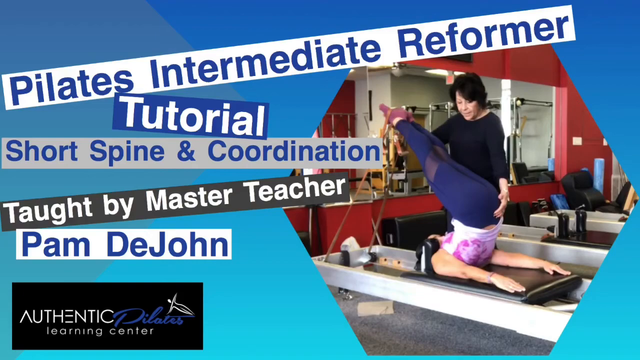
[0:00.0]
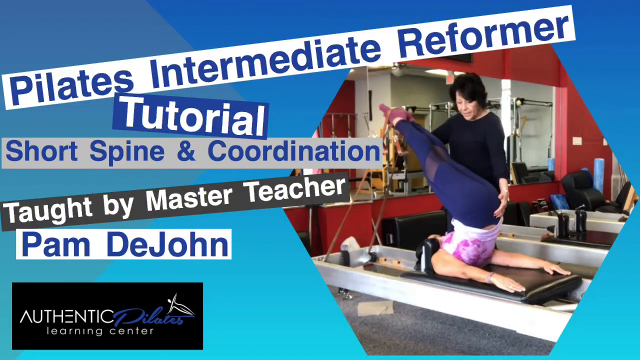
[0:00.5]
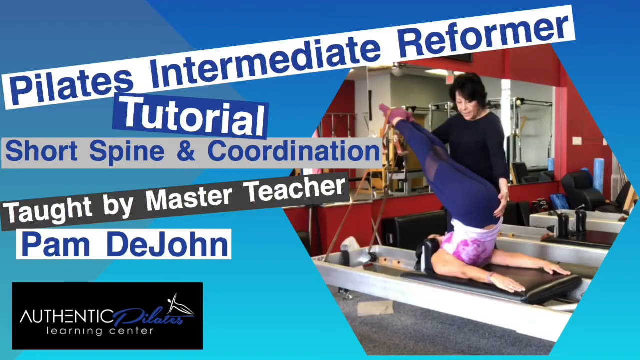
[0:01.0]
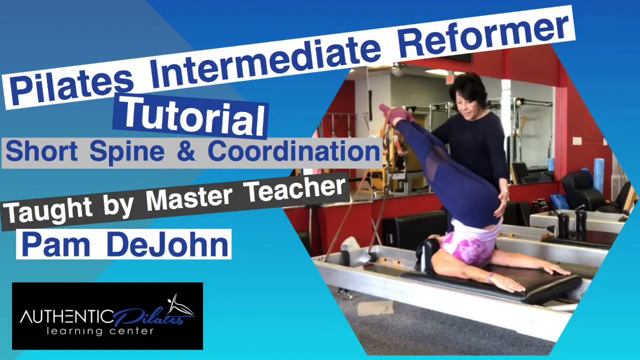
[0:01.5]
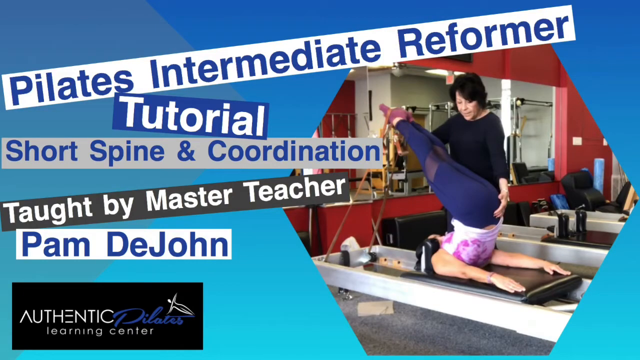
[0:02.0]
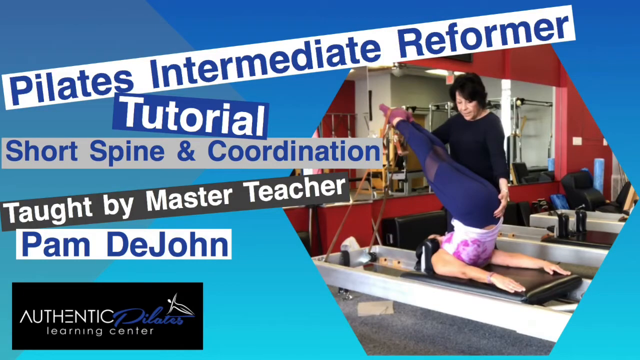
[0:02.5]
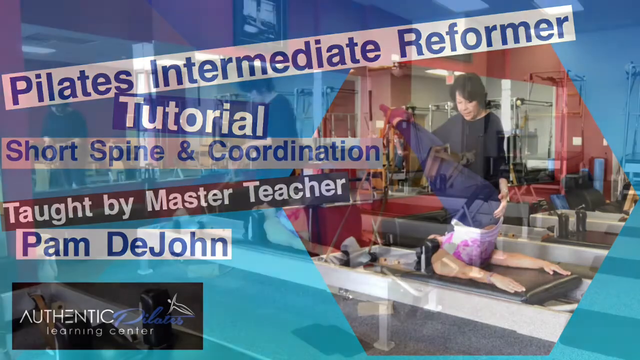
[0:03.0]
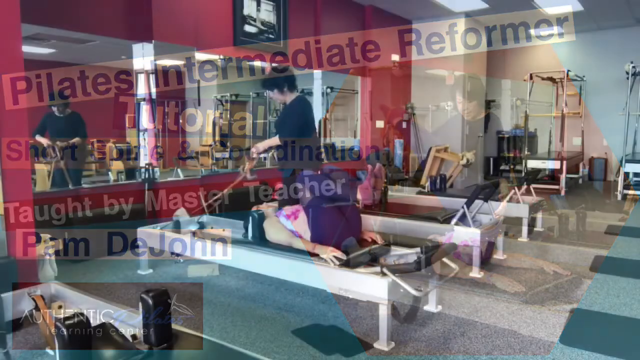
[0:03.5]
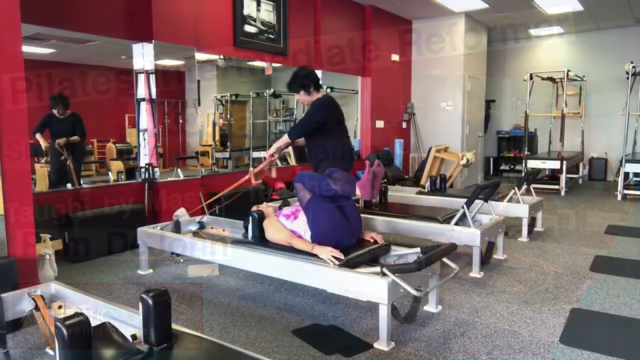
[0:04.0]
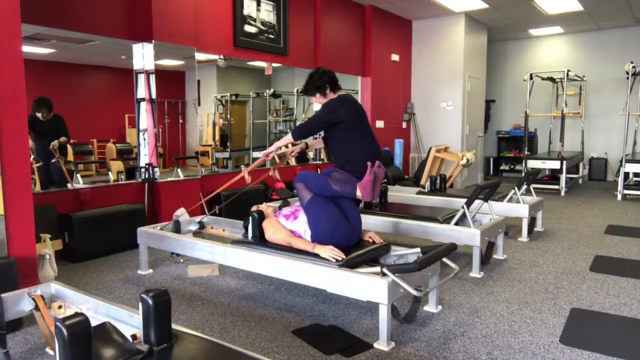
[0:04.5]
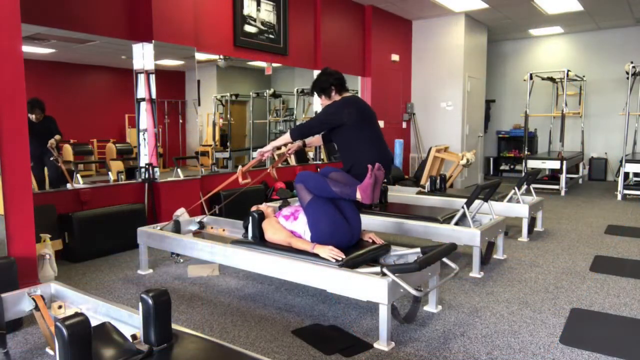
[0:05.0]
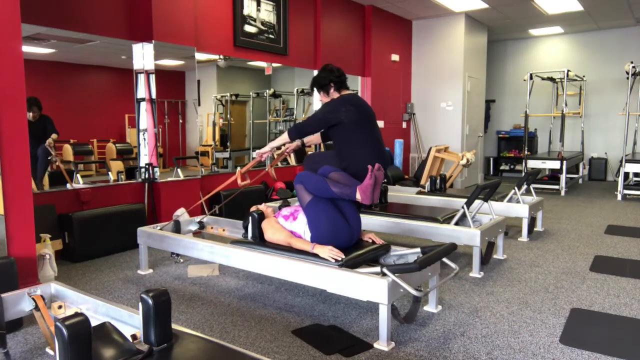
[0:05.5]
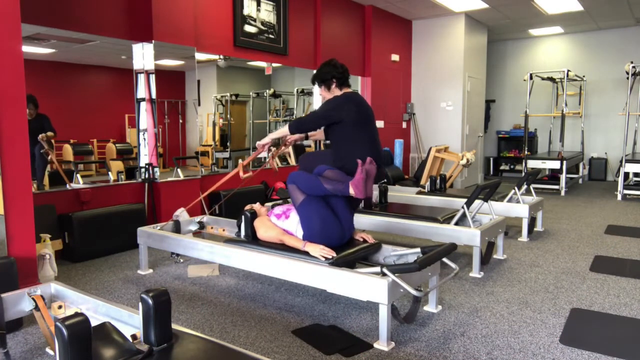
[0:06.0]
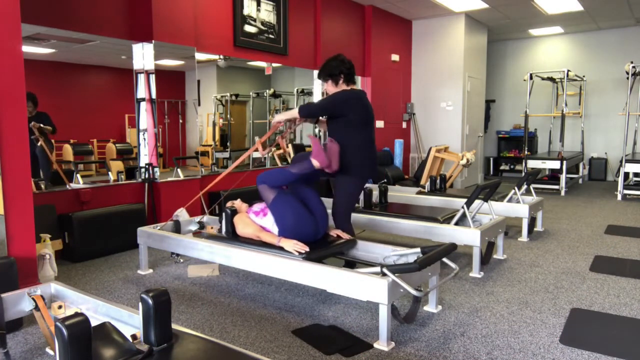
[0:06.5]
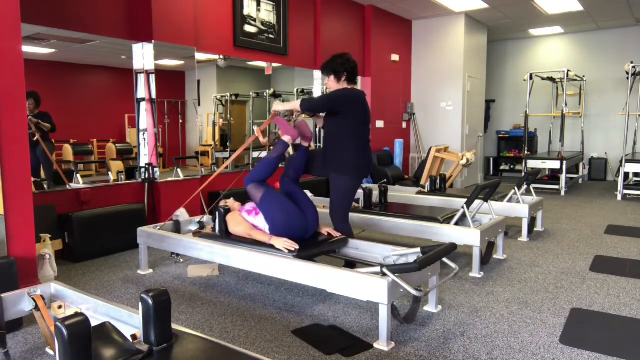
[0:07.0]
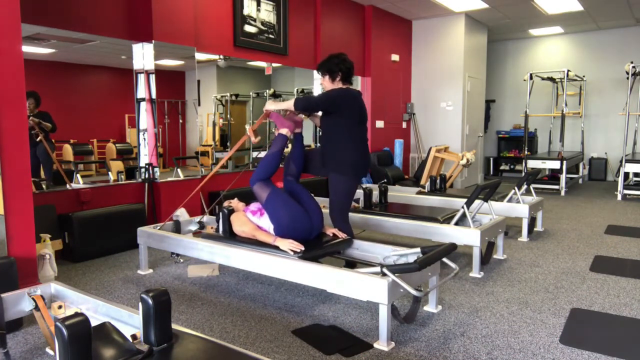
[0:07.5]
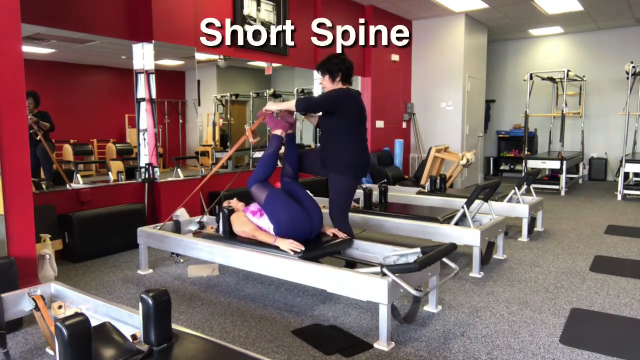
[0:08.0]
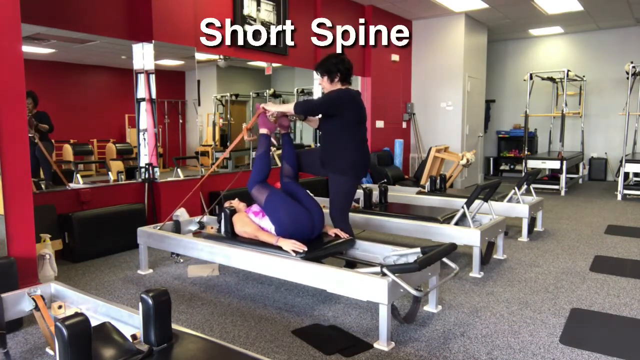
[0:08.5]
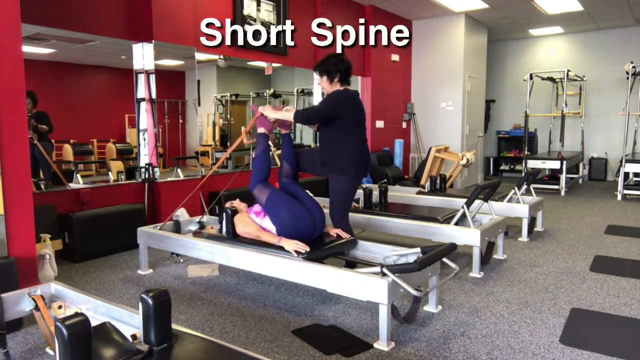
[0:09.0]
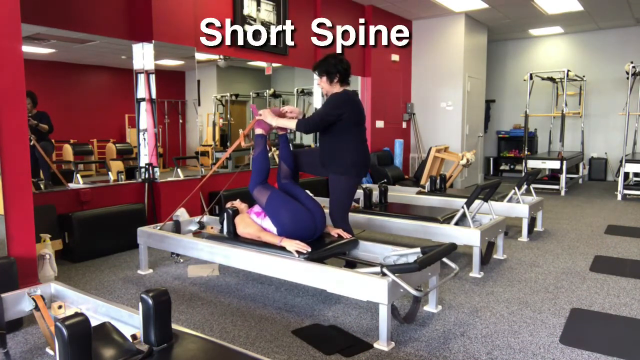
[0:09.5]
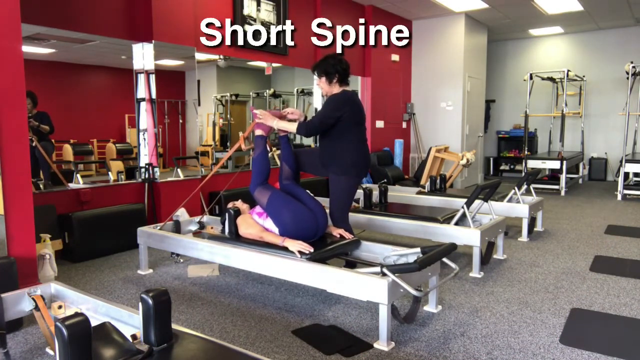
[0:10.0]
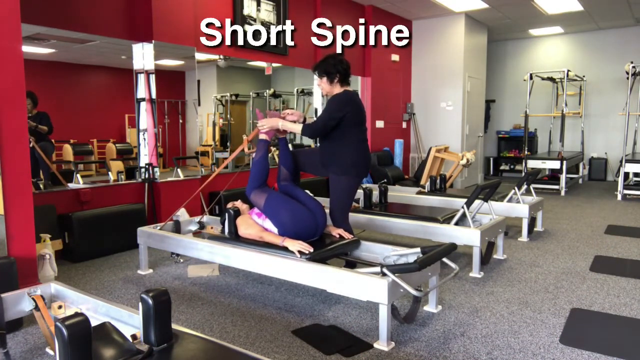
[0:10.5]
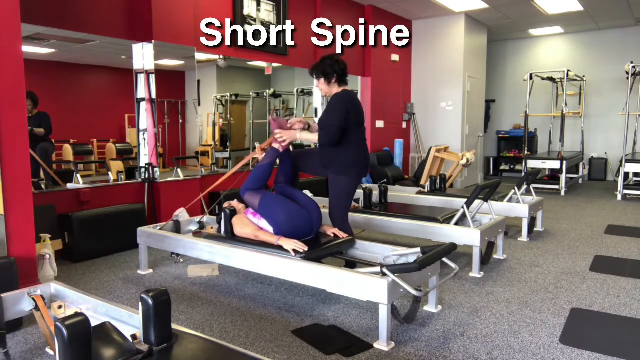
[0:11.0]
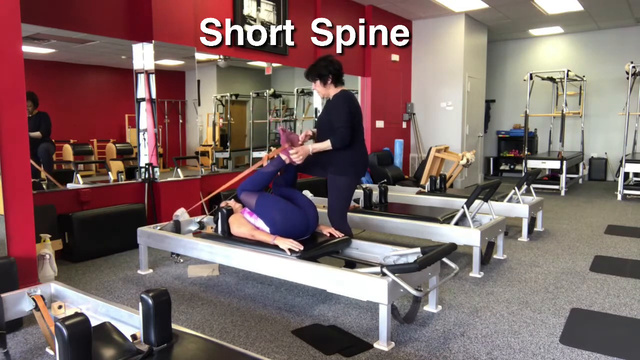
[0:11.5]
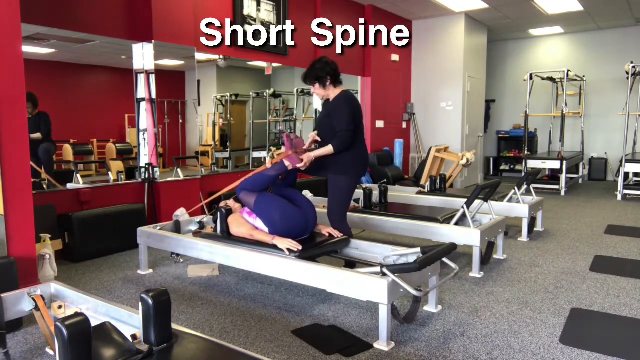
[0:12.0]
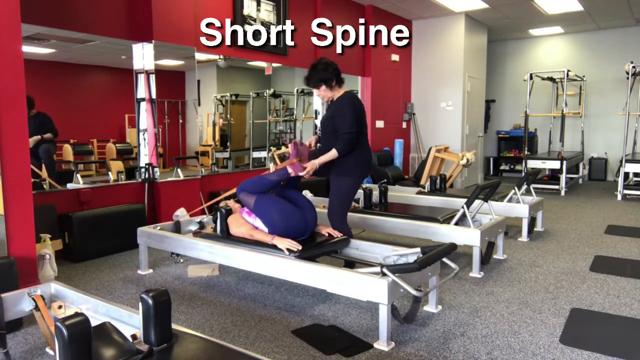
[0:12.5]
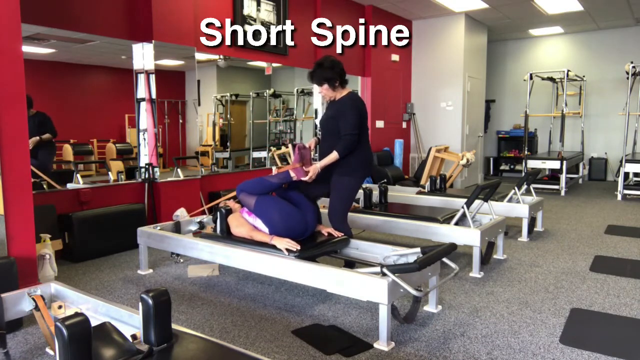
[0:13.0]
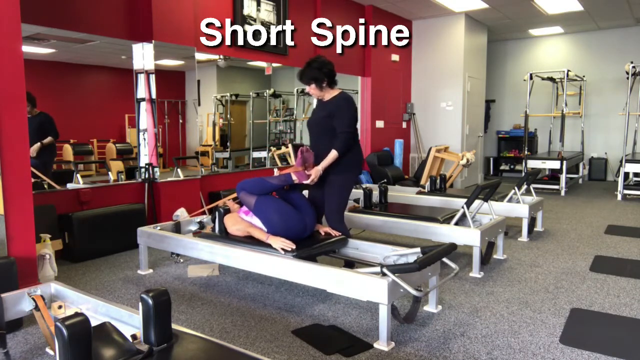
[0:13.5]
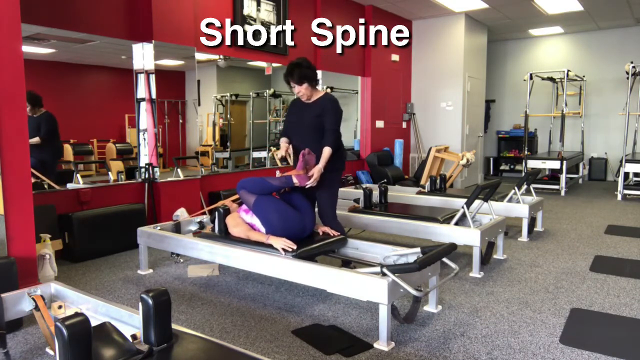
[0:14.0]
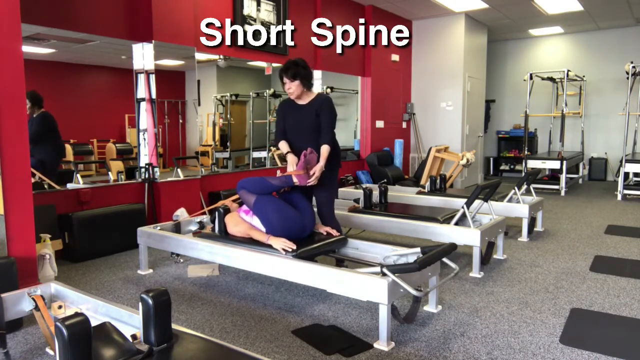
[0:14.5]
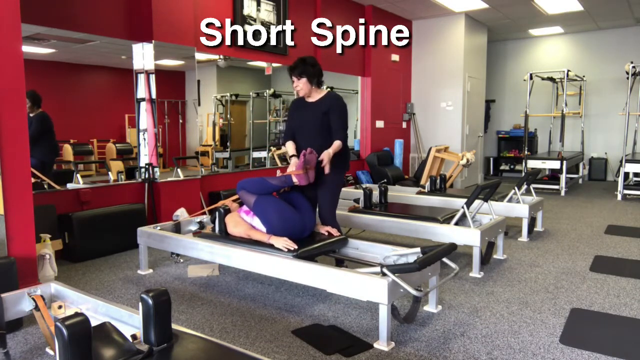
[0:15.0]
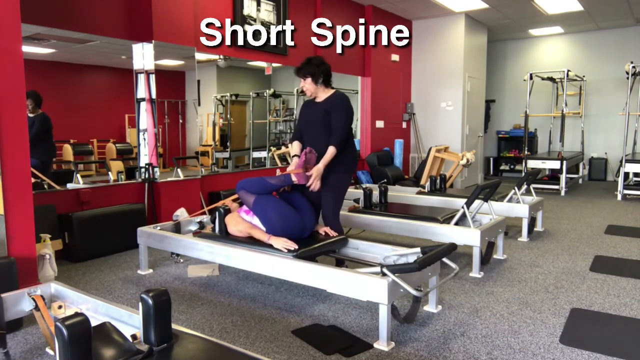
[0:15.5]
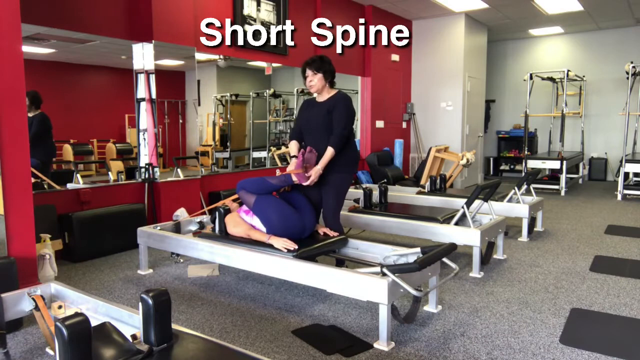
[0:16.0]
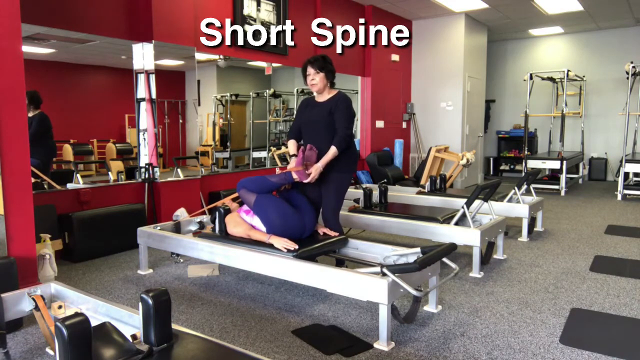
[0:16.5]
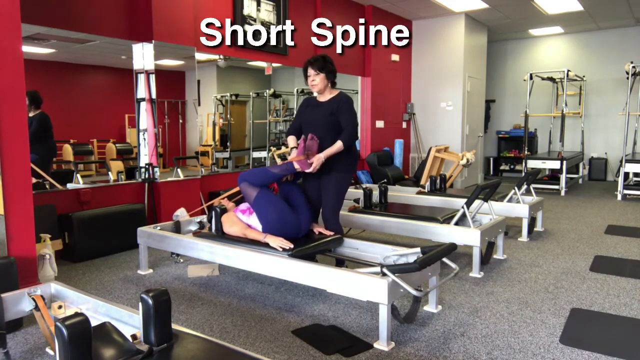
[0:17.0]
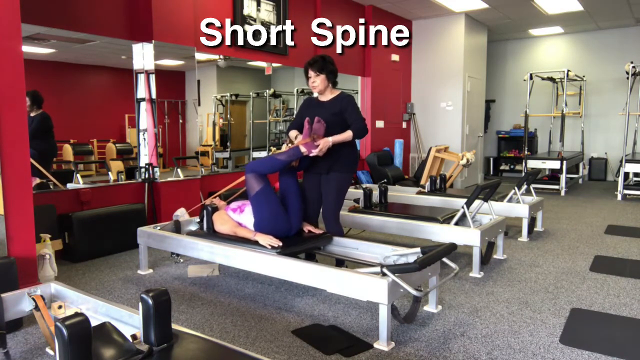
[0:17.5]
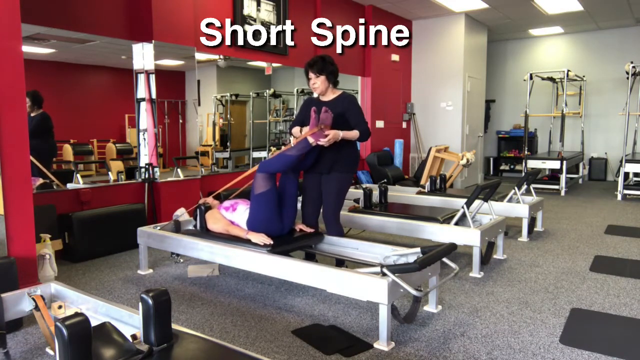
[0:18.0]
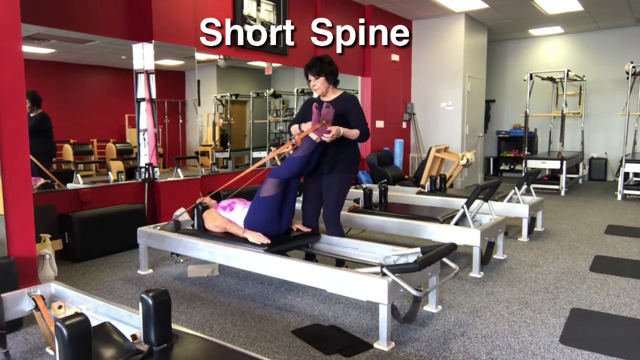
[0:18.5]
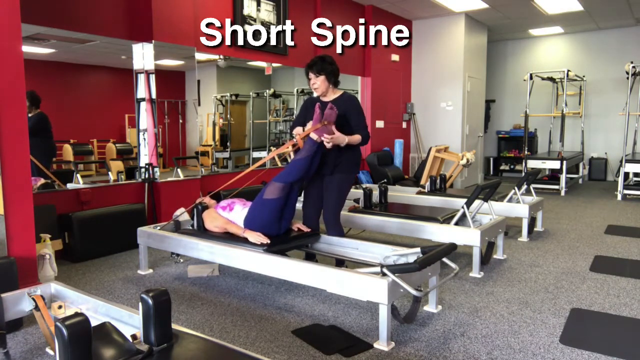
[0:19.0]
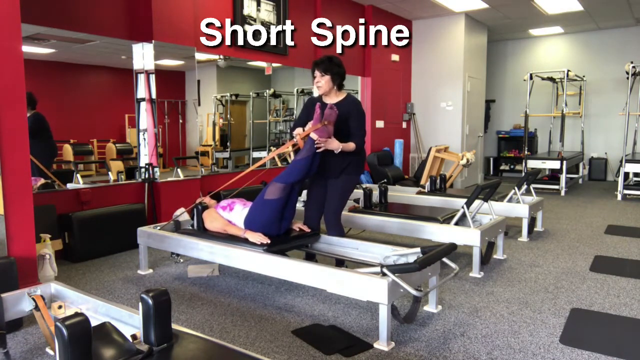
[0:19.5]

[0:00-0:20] A tutorial for the Pilates Intermediate Reformer opens with a title screen of text written in different text bars, arranged on angles so they slightly overlap. Together they read "Pilates Intermediate Reformer Tutorial, Short Spine and Coordination, Taught by Master Teacher Pam DeJohn." In the lower left of the screen is a rectangular box that says "Authentic Pilates Learning Center," and above it on the right is a photograph of a woman on a Pilates Reformer with another woman standing behind her, assisting her into position. This fades away to video of a studio with Pilates machines arranged along a mirrored red wall. A woman is on one of the machines, which has a white frame, a black padded carriage that moves back and forth, and elastic bands extending from the top with loops on their ends. The woman pushes back on the carriage and puts her feet into the loops at the ends of the cords, while a woman standing behind her assists her in putting the loops on her feet. The words "Short Spine" appear at the top of the screen. The woman bends her knees to get into position and then begins to stretch out her legs as the carriage moves backwards, while the woman standing behind the machine holds her feet.